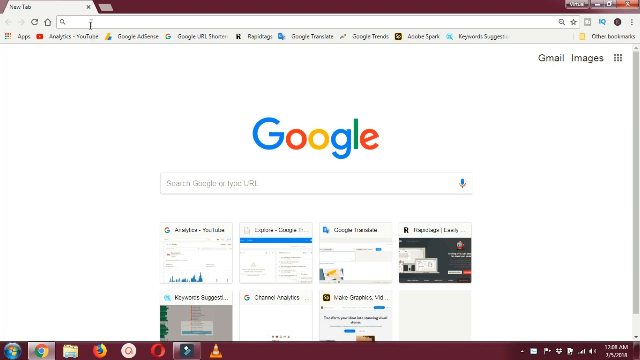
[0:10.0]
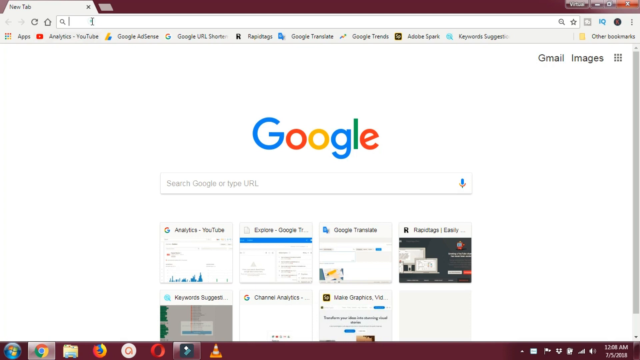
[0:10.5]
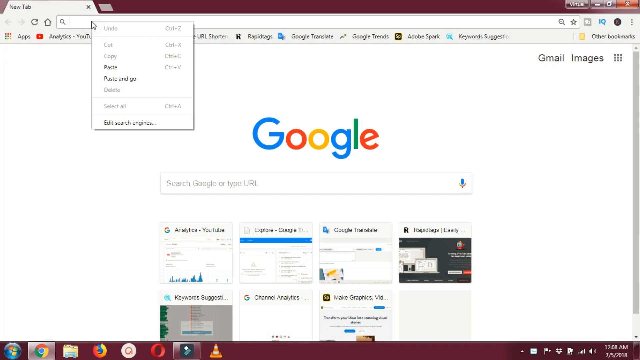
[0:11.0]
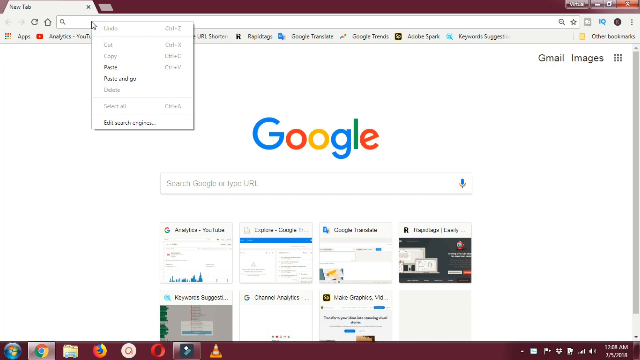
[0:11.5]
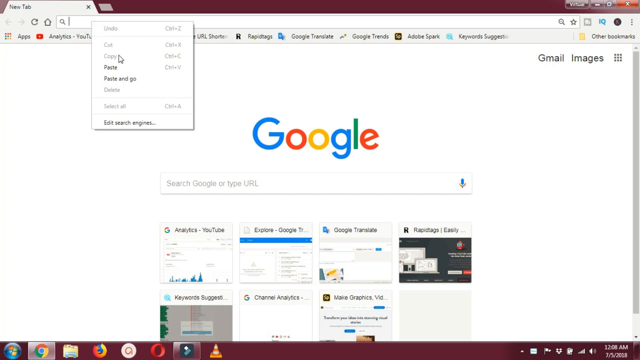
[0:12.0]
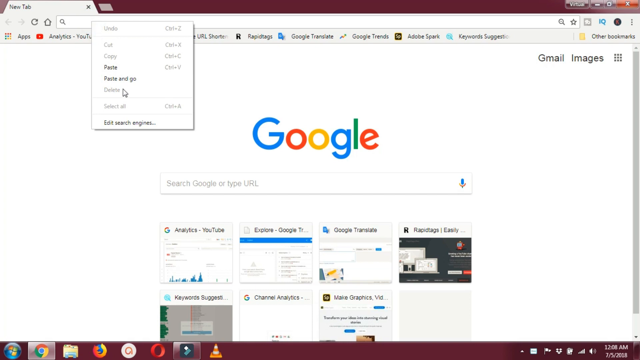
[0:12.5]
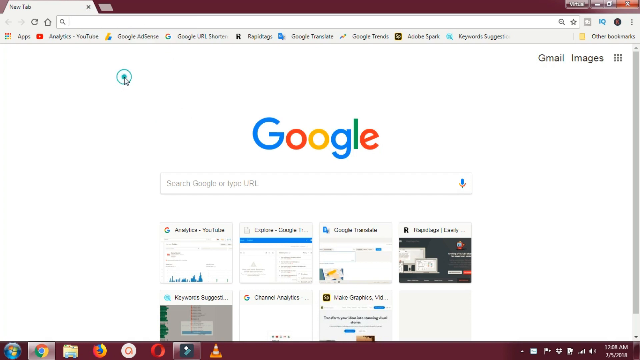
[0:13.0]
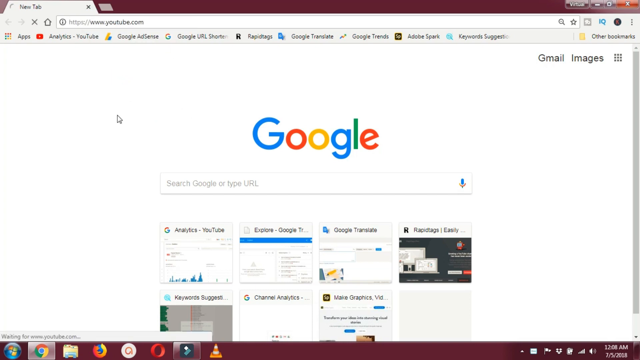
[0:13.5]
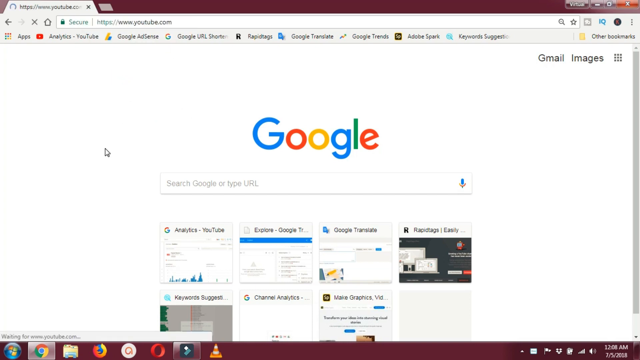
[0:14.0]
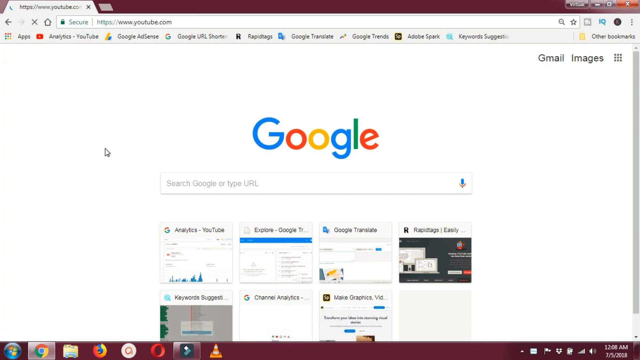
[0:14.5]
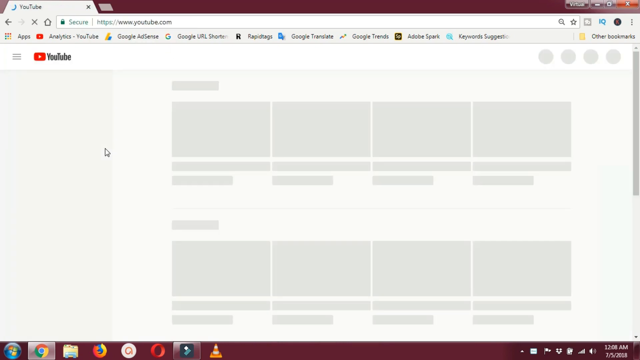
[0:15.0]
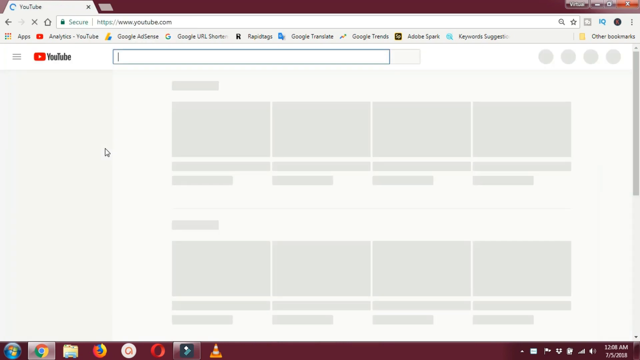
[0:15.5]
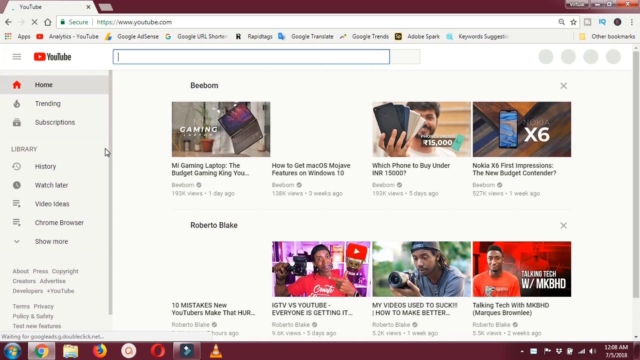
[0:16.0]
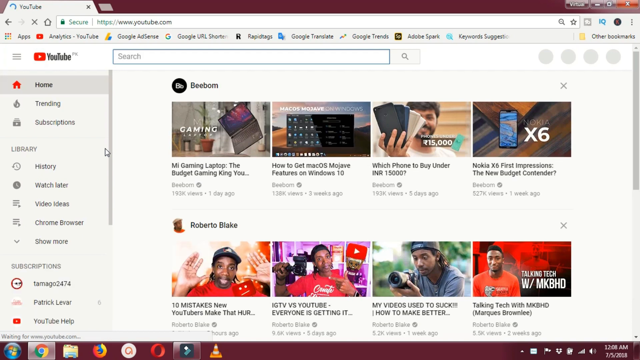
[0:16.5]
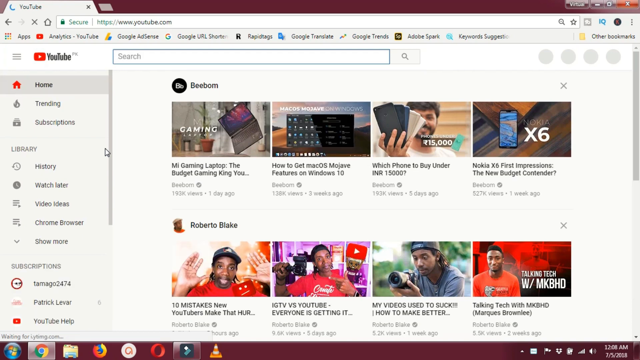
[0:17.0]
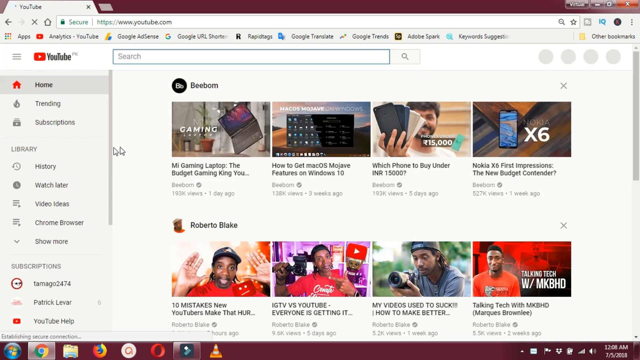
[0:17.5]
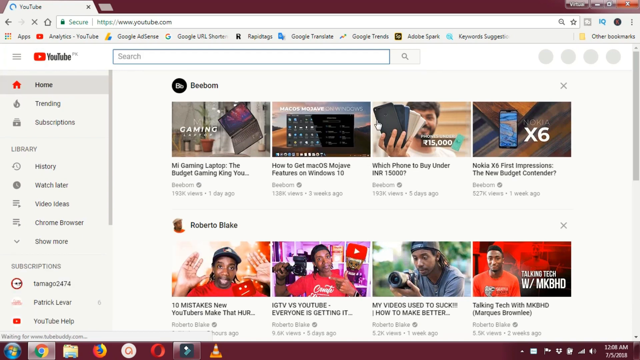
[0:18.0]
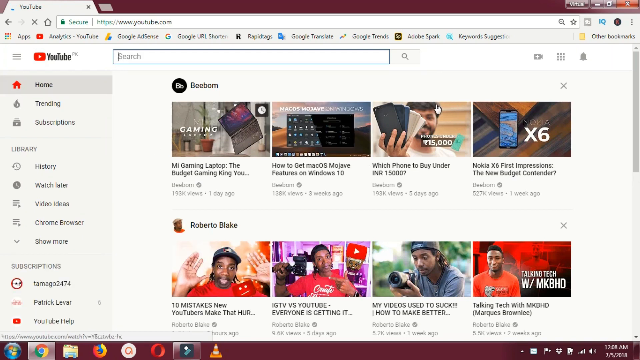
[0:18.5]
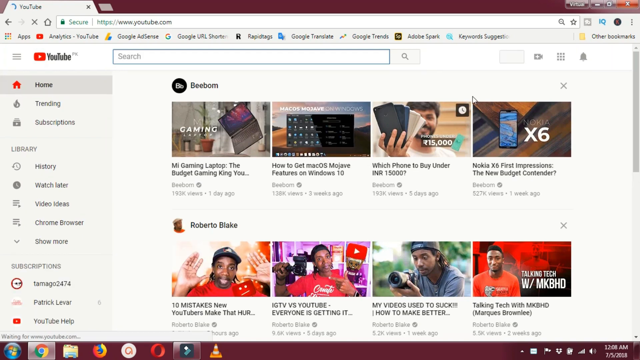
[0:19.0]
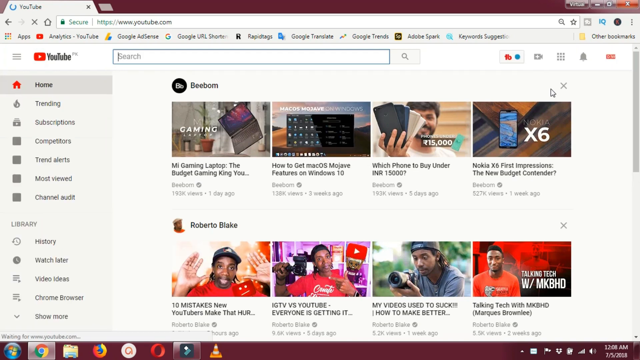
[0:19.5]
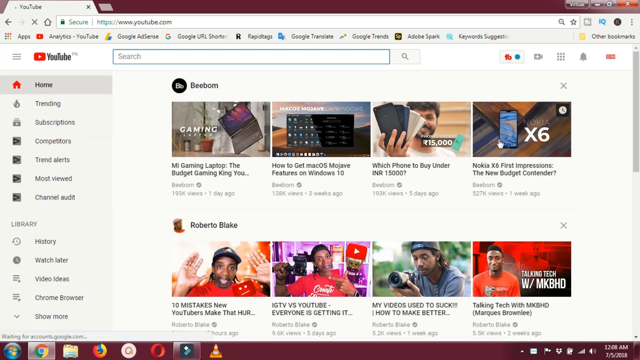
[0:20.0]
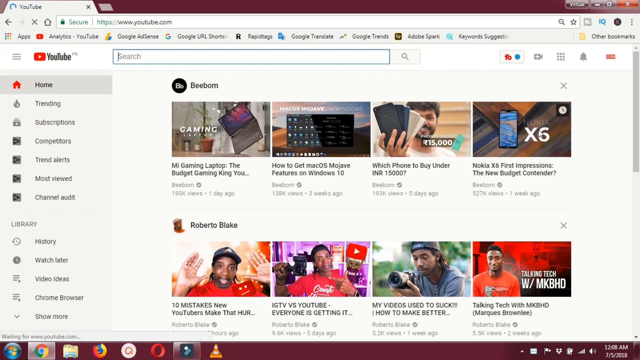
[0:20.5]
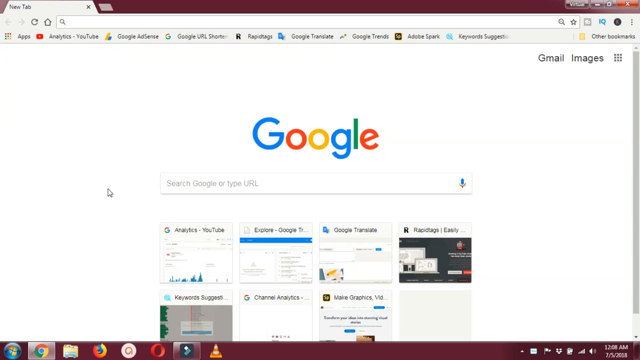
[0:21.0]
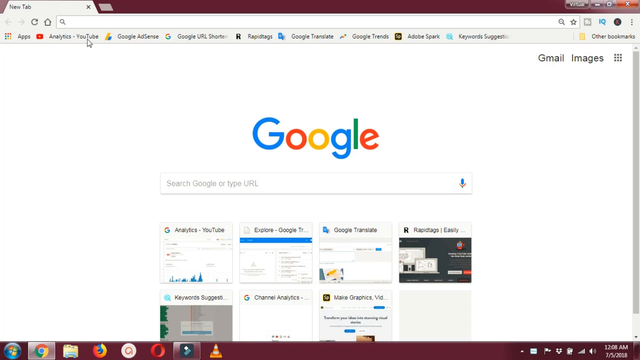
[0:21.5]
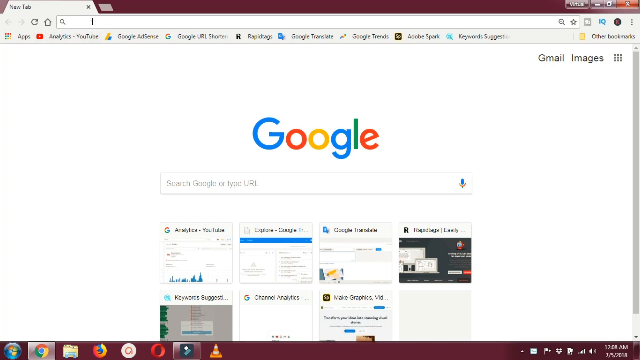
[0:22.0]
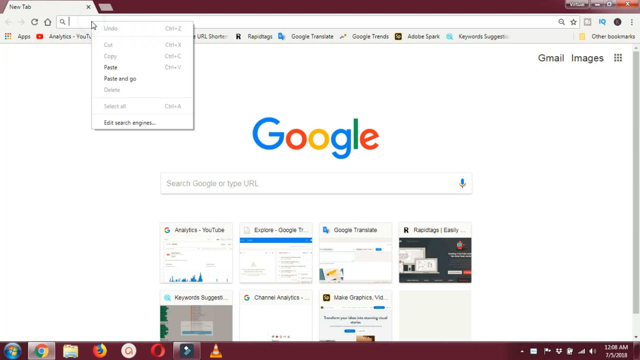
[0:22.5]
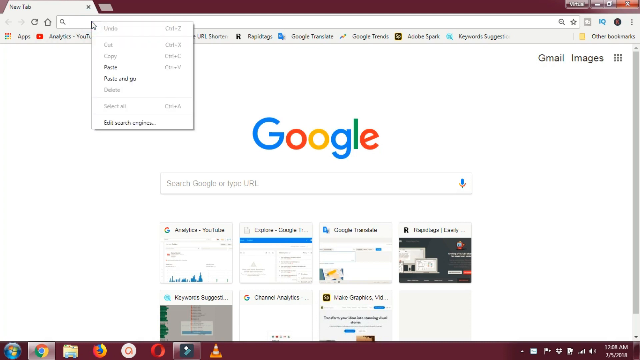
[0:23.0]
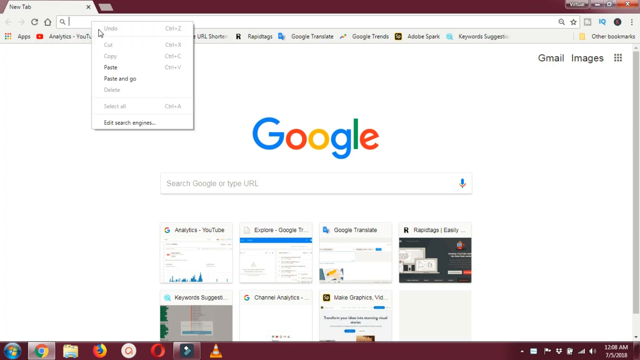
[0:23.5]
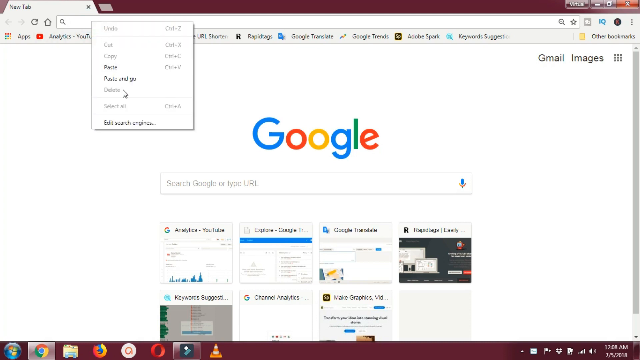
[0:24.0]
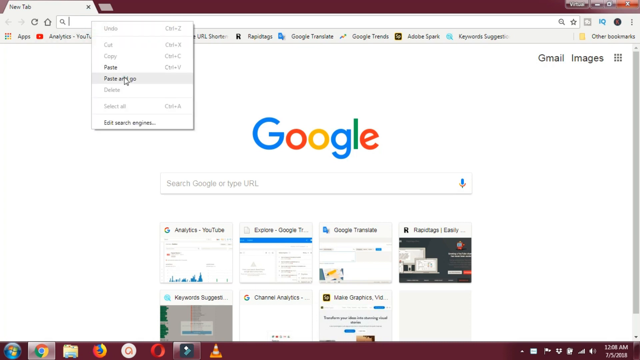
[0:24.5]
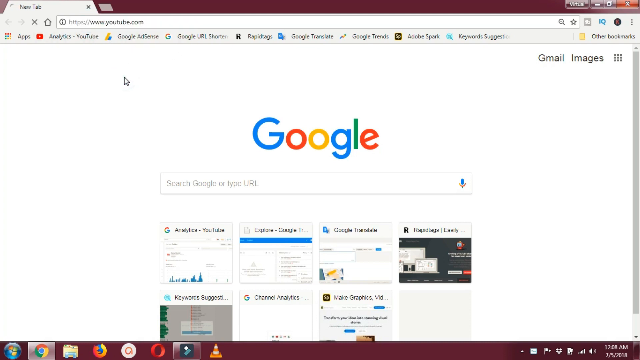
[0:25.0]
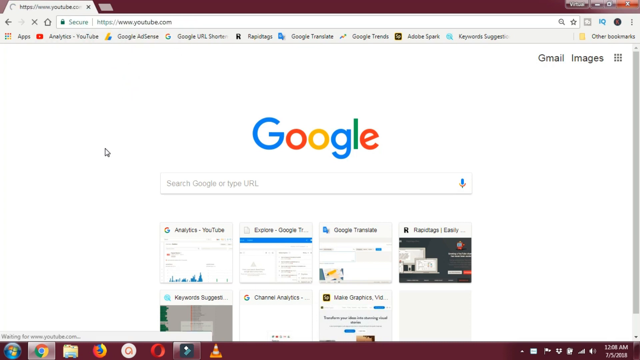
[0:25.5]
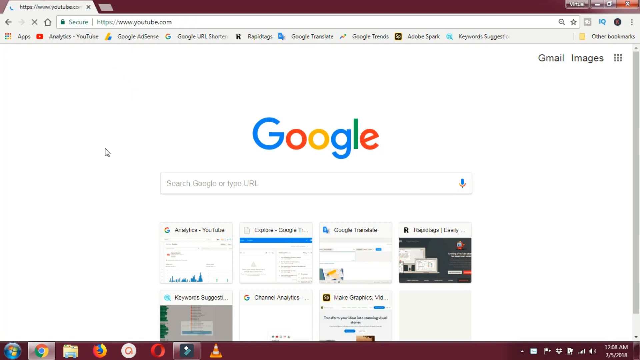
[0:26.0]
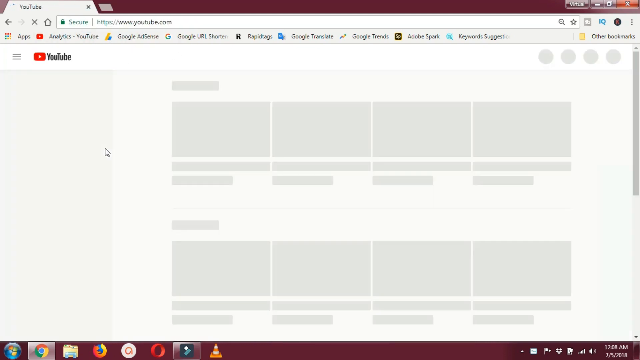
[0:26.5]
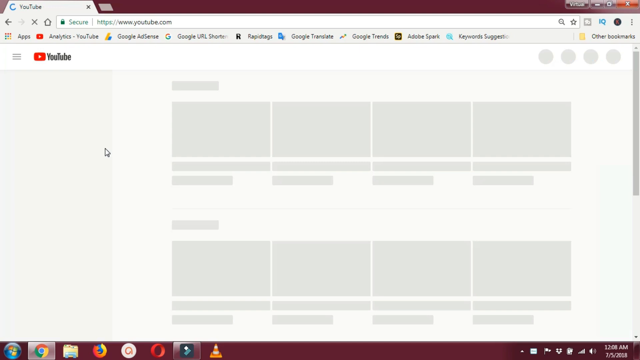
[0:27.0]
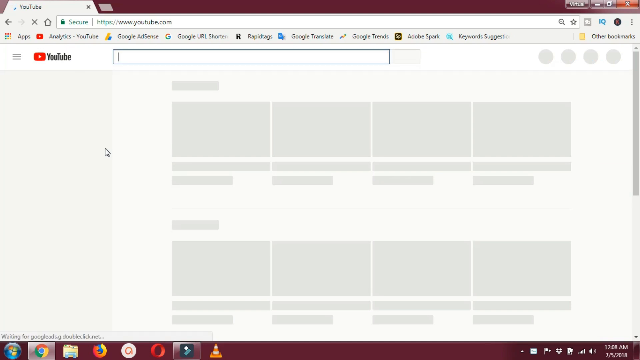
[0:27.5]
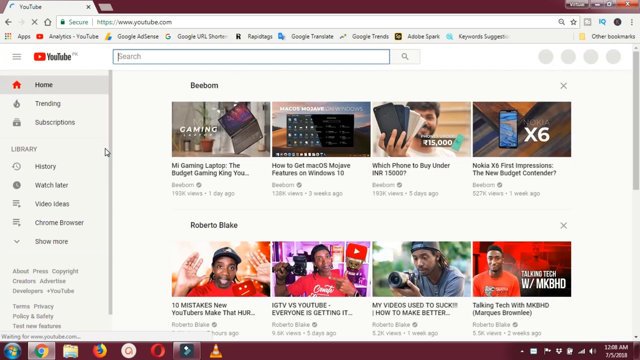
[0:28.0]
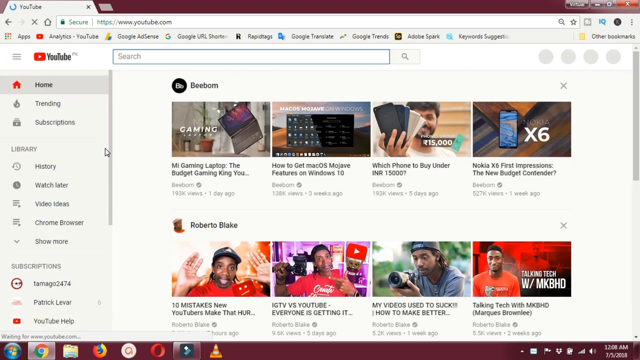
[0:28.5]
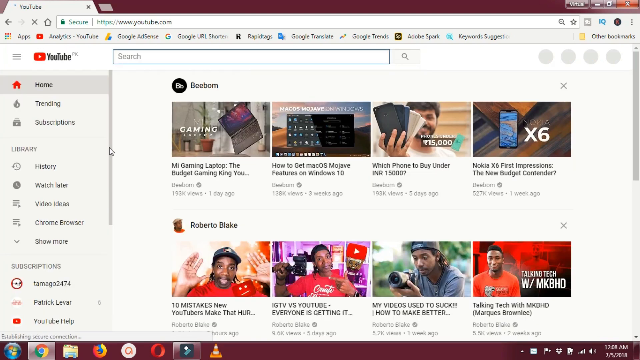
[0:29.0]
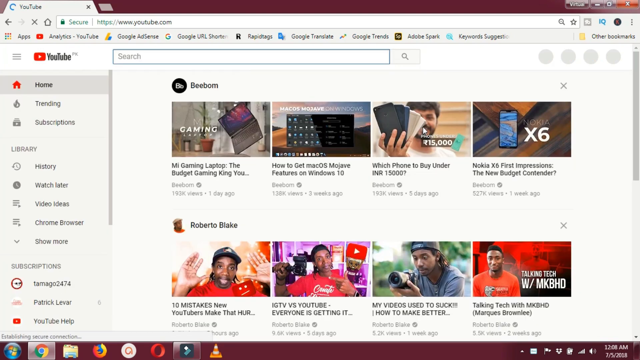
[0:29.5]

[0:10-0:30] On the Google page, the search button in the top left corner is used and "youtube" is entered; it looks like the text was pasted with the URL rather than typed. The page navigates straight to YouTube, where different videos load. The cursor moves over the random videos without selecting any of them. YouTube is searched again, and the same videos are shown.